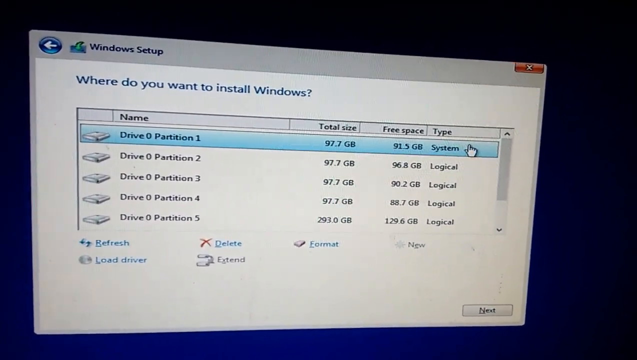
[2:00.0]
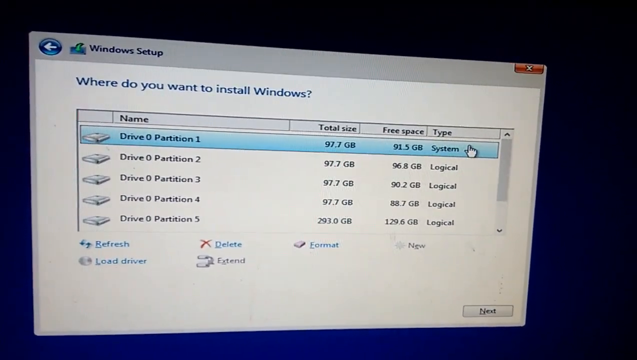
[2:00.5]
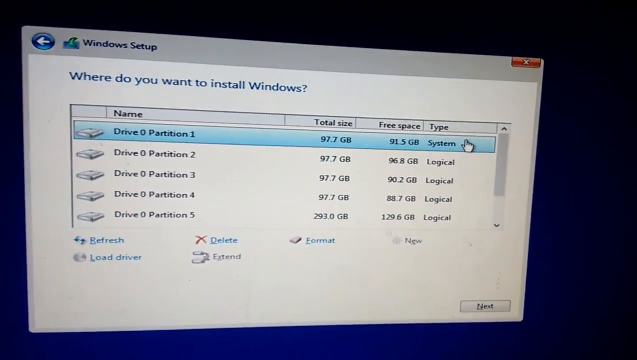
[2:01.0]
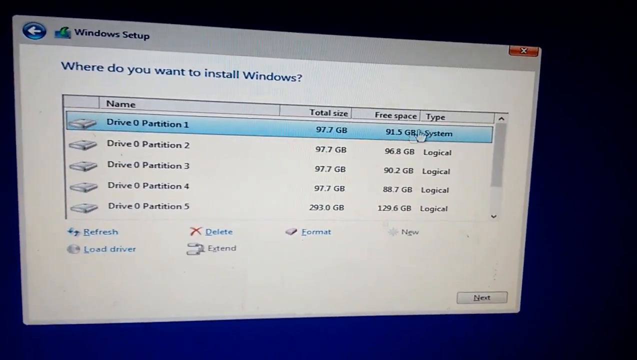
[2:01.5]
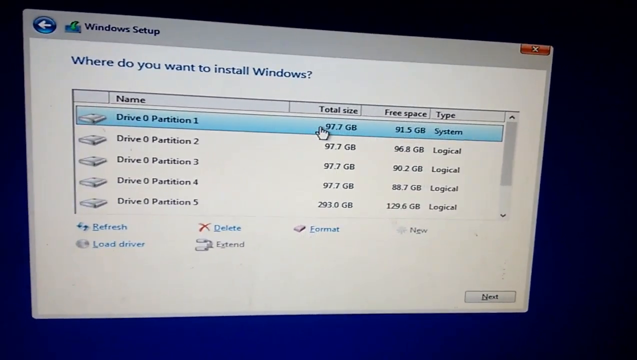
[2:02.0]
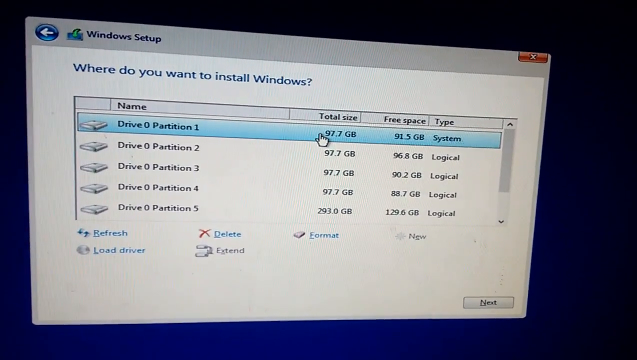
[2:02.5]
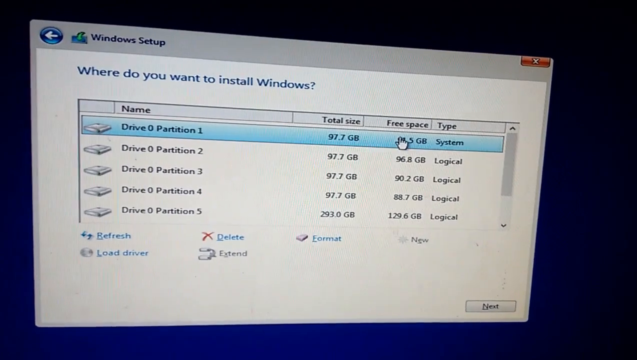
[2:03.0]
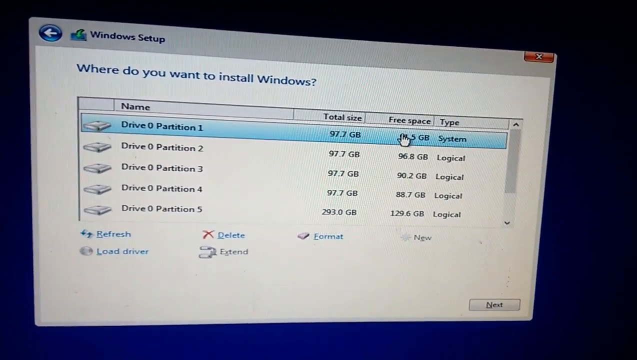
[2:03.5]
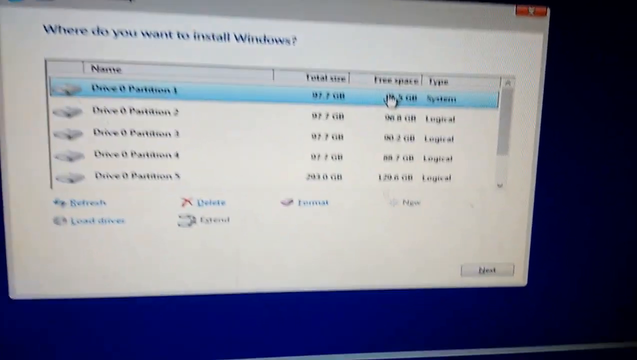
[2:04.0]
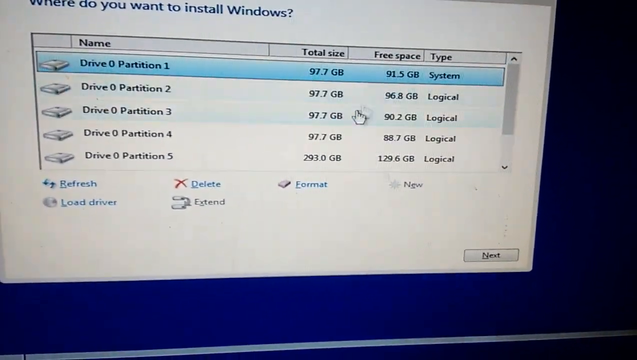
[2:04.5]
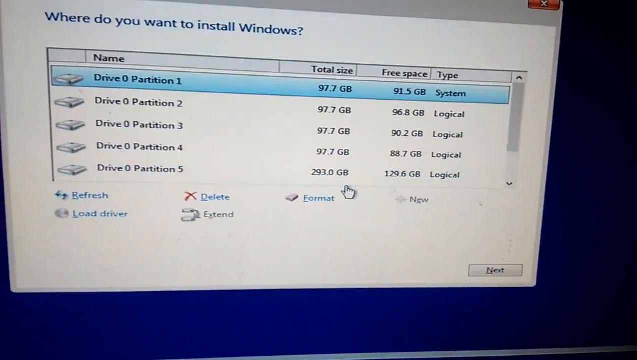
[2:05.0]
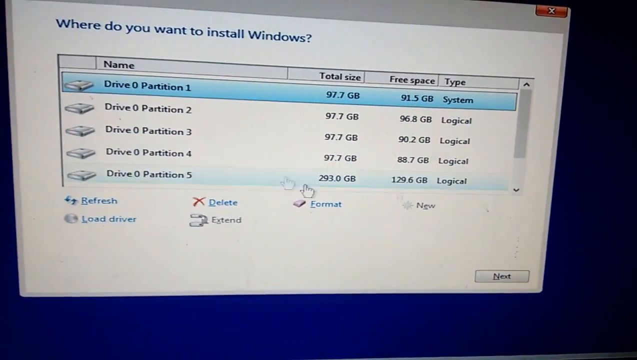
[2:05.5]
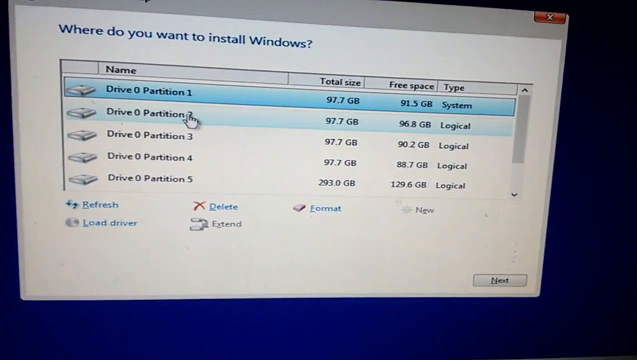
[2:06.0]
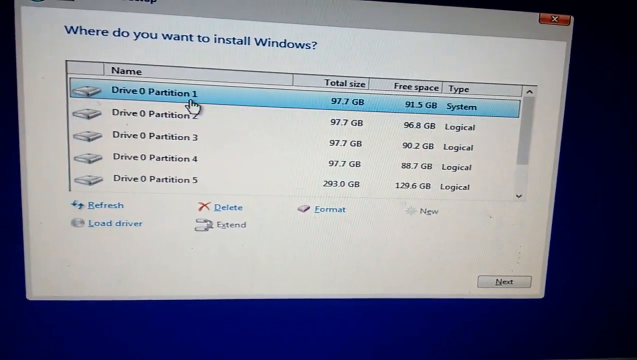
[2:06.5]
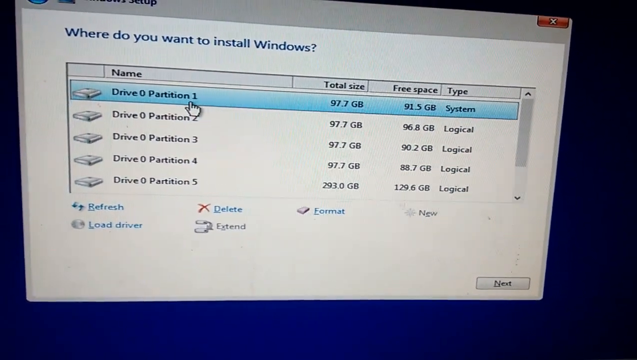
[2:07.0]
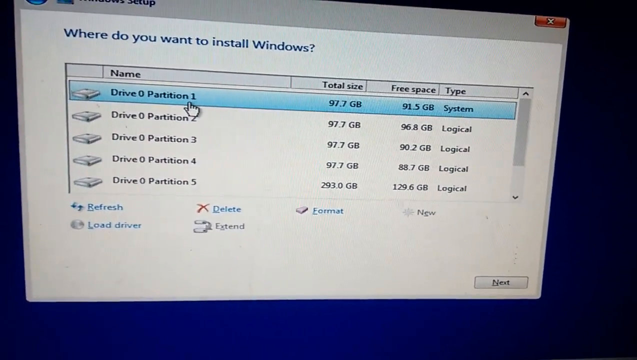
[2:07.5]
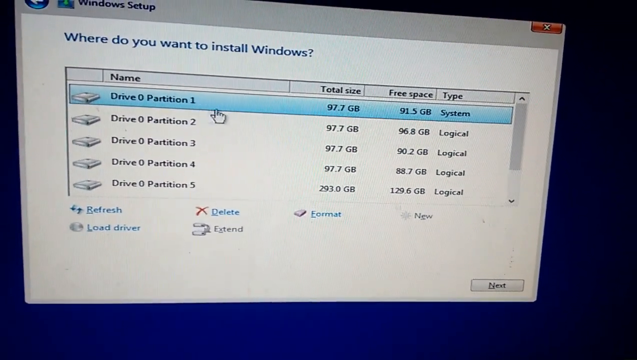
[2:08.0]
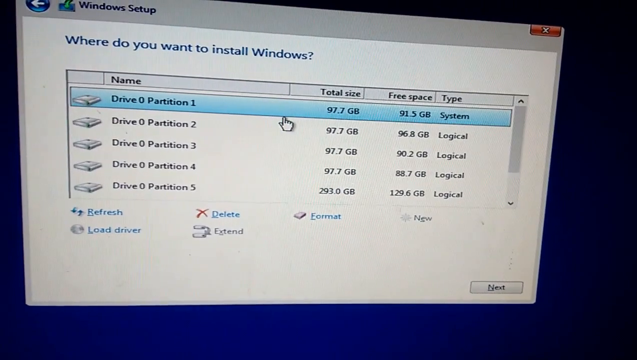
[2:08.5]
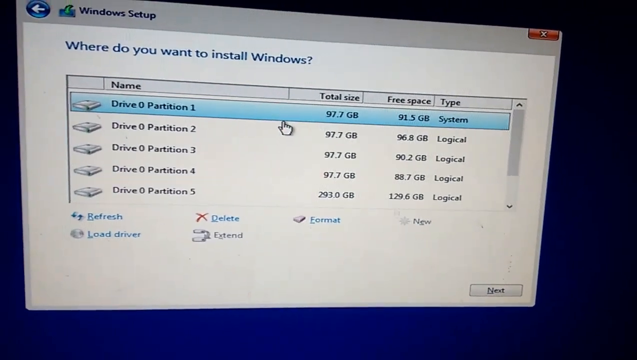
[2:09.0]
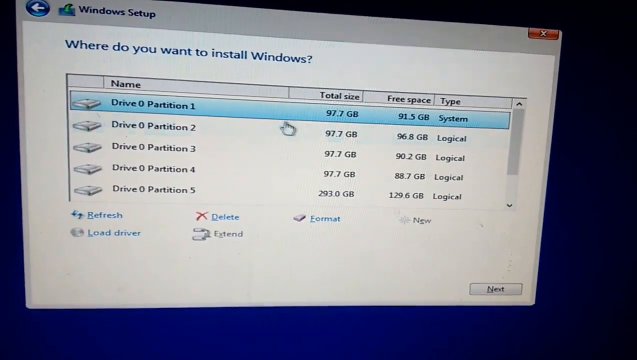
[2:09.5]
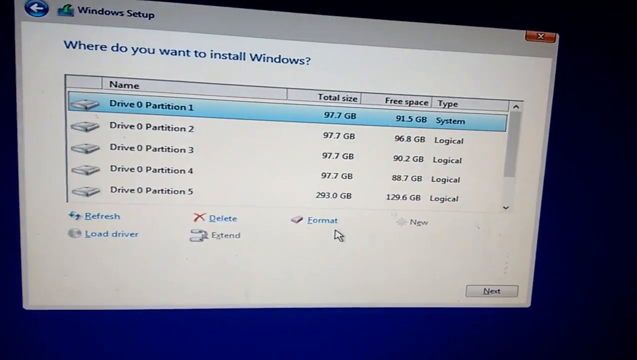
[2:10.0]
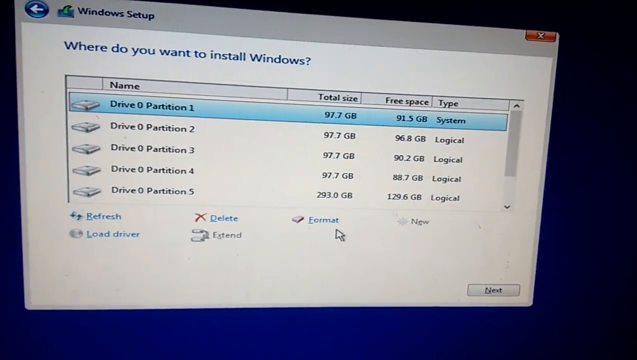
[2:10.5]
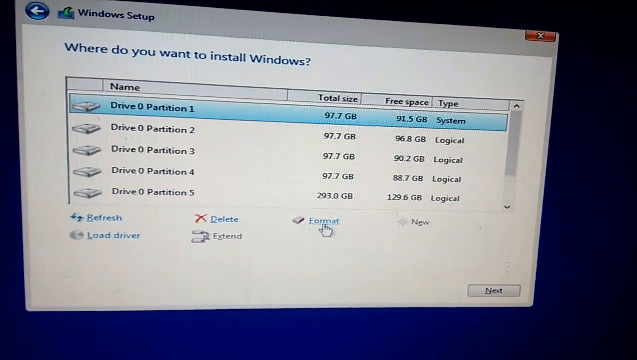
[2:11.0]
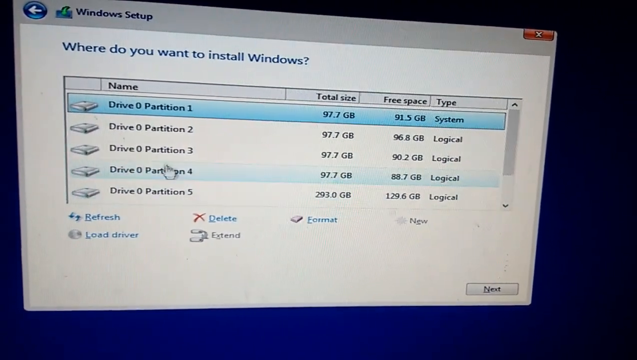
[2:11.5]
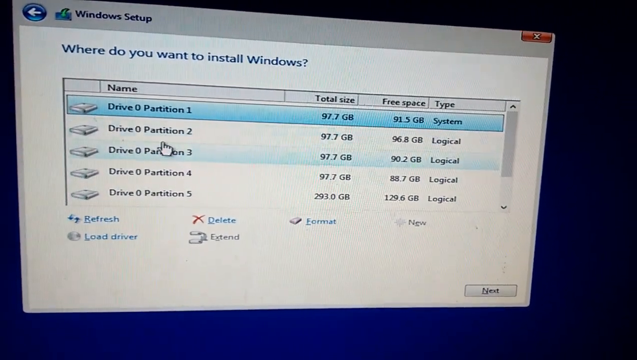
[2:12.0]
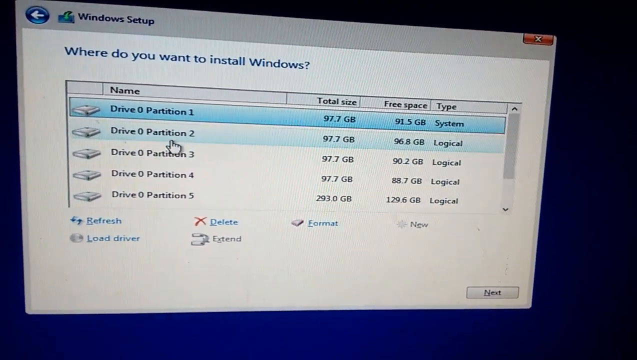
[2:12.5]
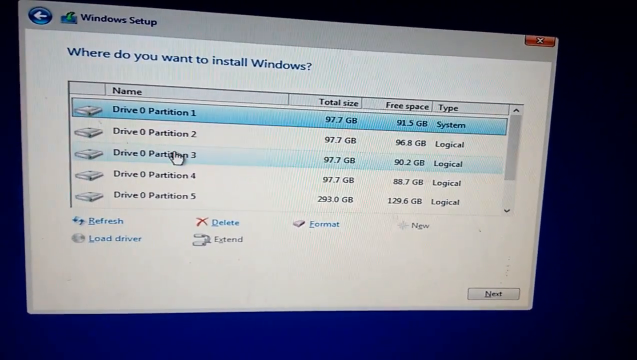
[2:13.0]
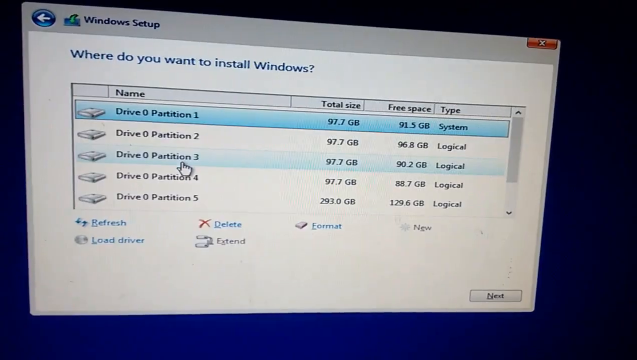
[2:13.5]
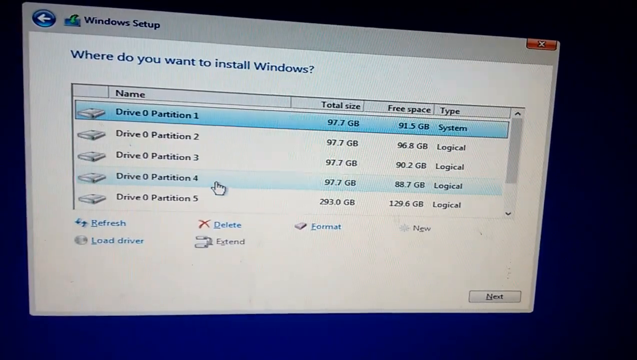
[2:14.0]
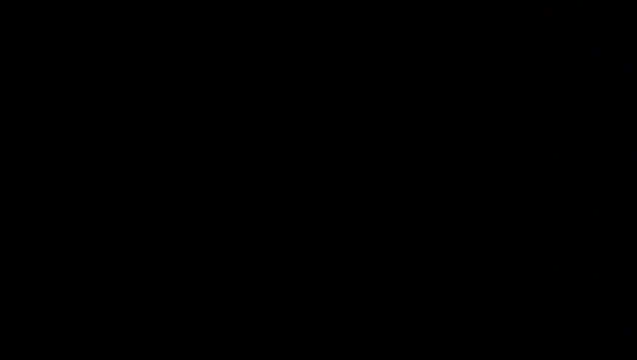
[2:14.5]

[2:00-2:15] He remains on the screen for choosing which partition to install Windows to. Drive 0 partitions 1 through 4 show a size of 97.7 gigabytes, while partition 5 has 293 gigabytes available. All of them are type Logical except Drive 0 Partition 1, which is type System. He moves the cursor around, highlighting the different partitions without clicking on any of them. A Next button is at the bottom of the window. He appears a little confused and unsure which partition to choose.